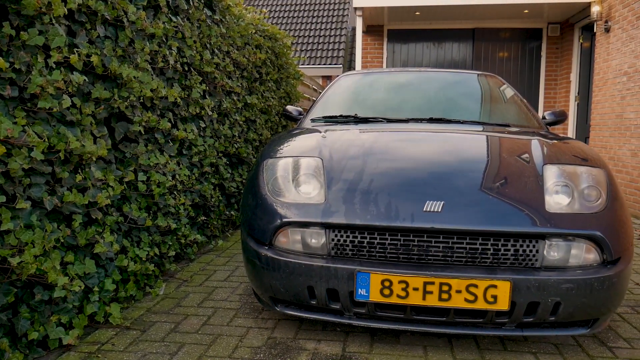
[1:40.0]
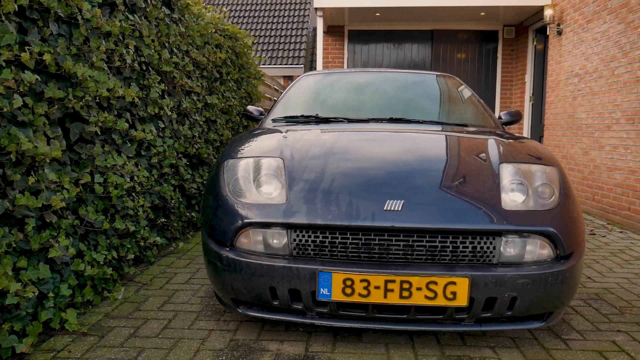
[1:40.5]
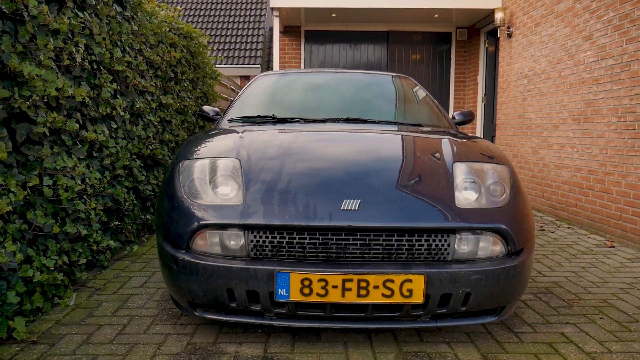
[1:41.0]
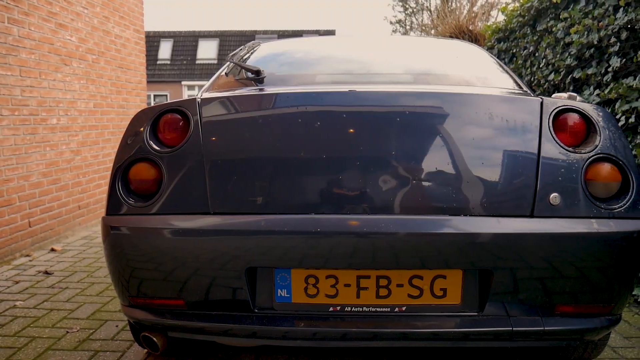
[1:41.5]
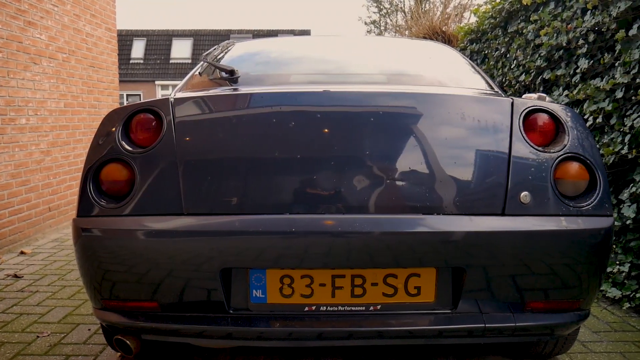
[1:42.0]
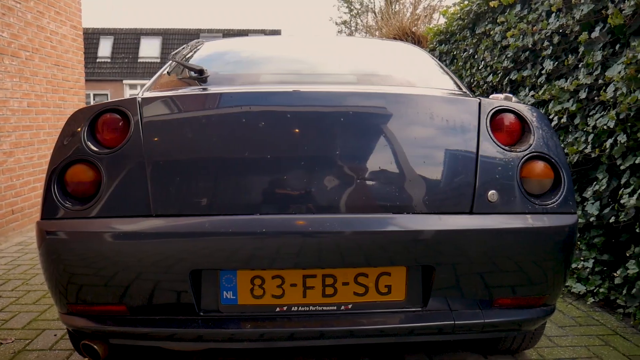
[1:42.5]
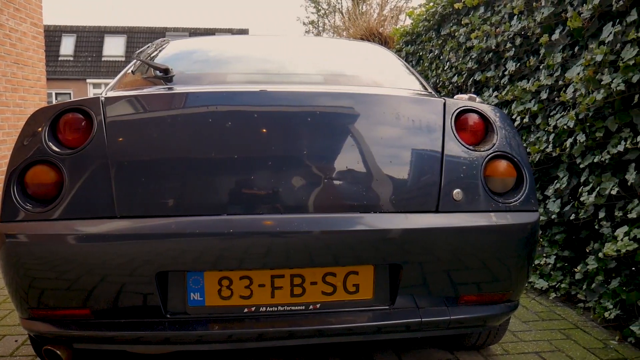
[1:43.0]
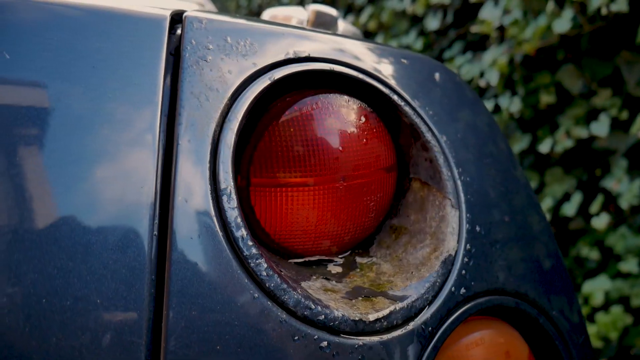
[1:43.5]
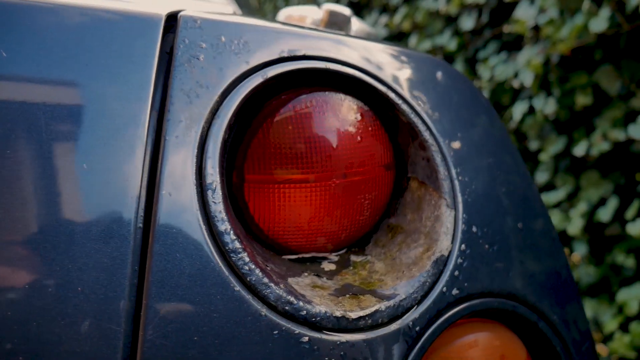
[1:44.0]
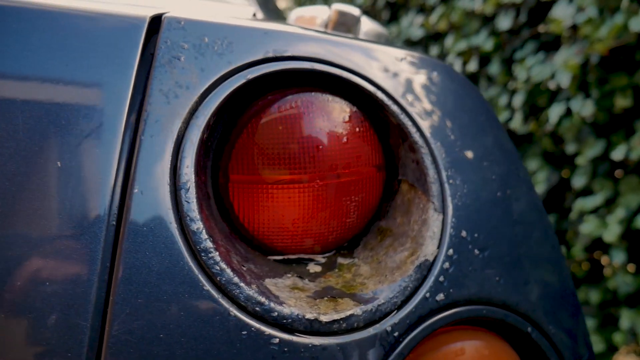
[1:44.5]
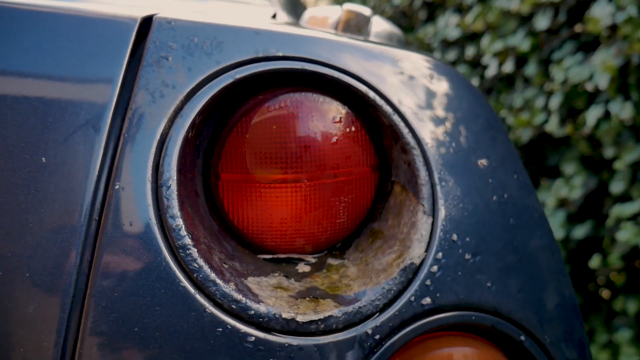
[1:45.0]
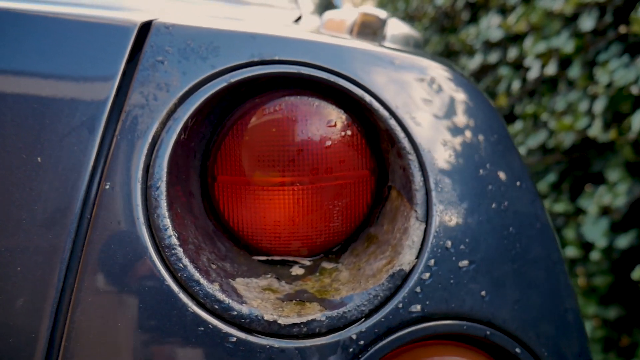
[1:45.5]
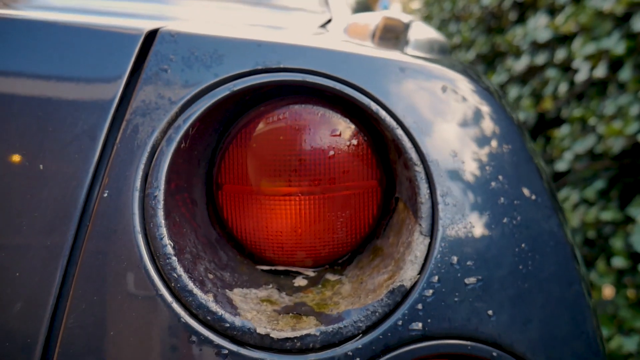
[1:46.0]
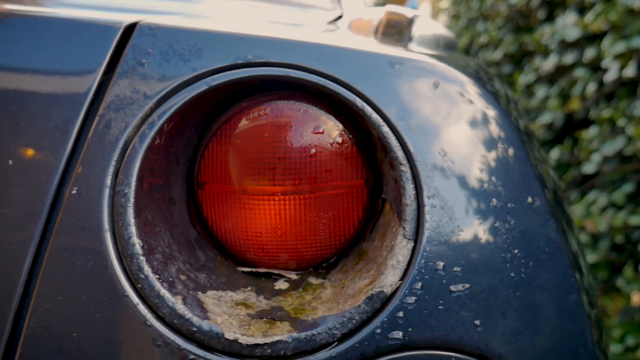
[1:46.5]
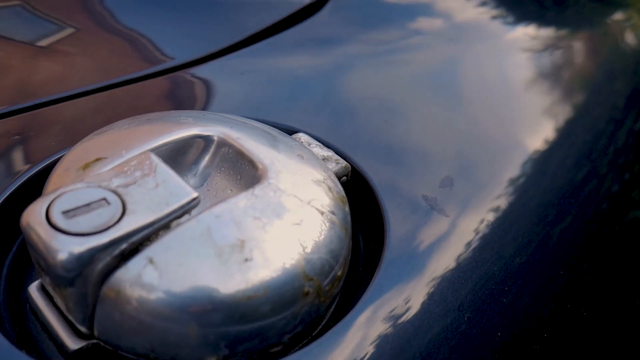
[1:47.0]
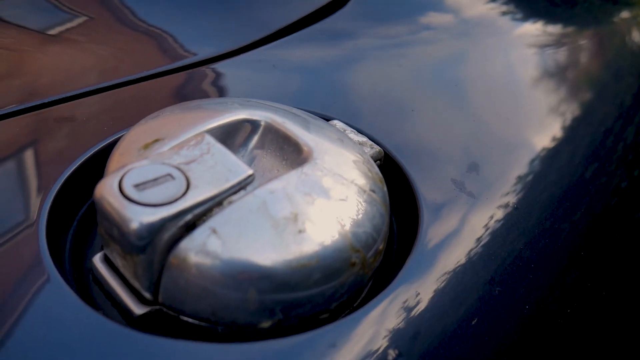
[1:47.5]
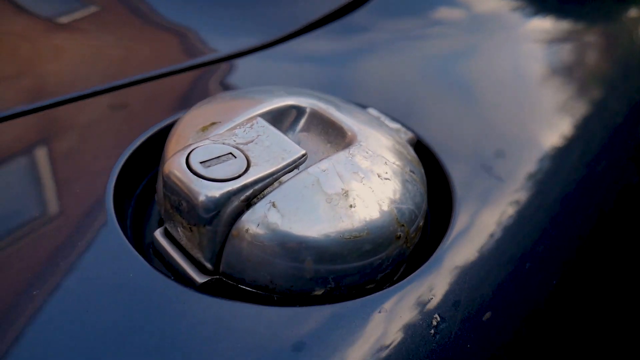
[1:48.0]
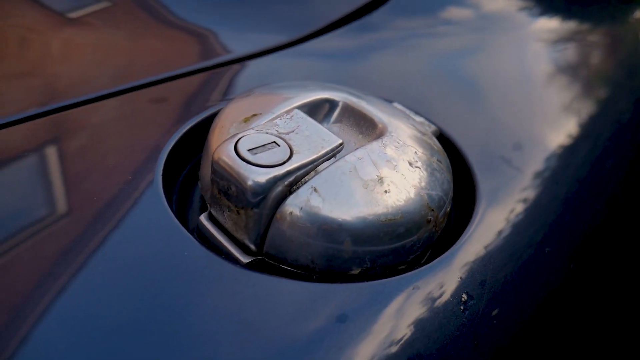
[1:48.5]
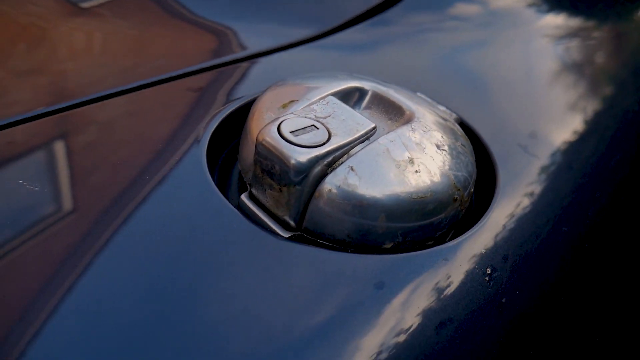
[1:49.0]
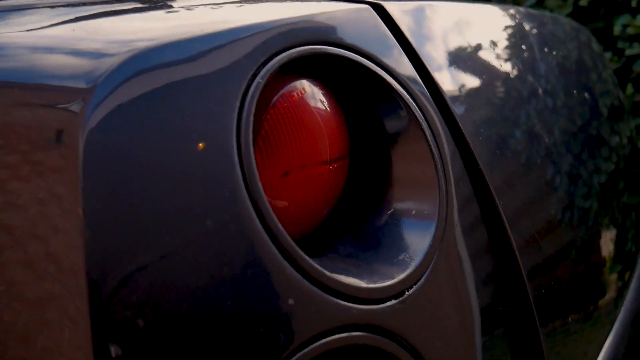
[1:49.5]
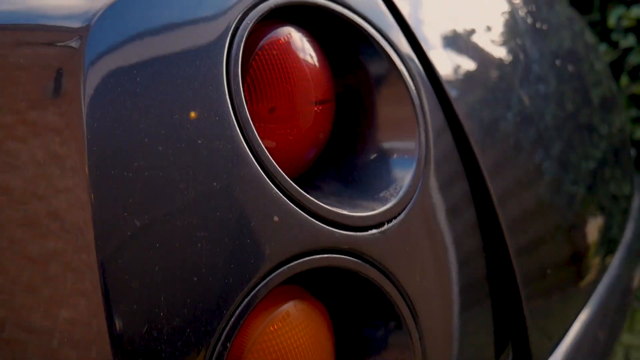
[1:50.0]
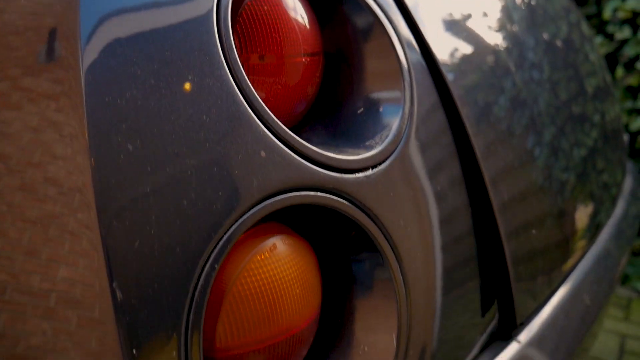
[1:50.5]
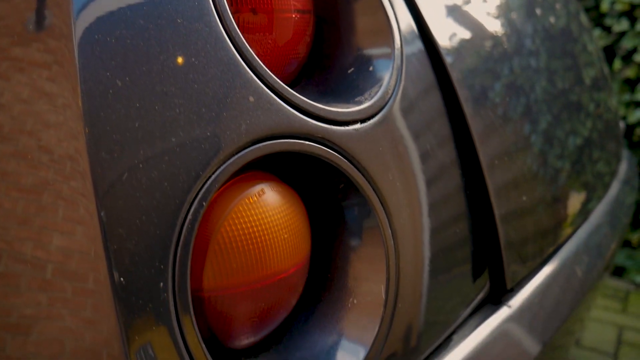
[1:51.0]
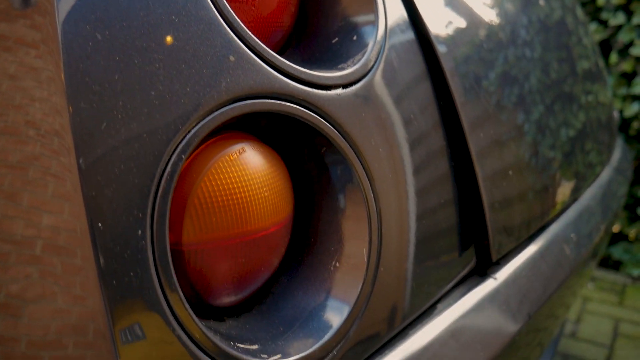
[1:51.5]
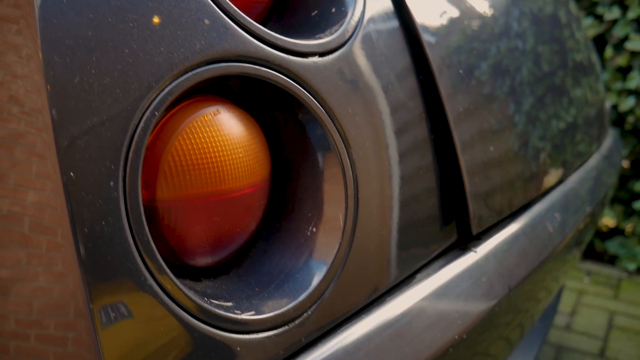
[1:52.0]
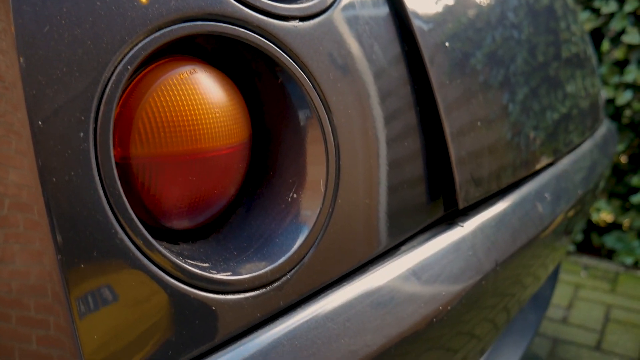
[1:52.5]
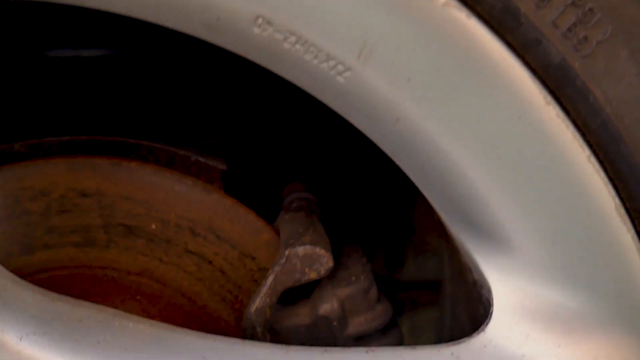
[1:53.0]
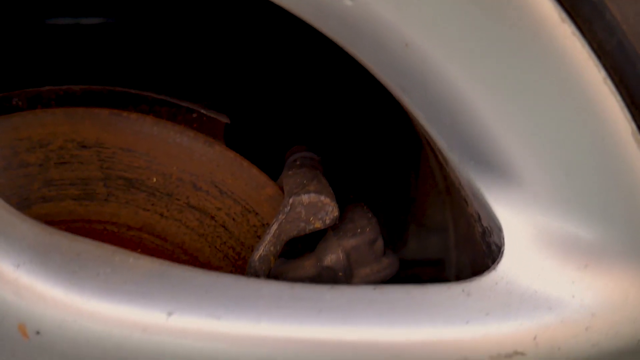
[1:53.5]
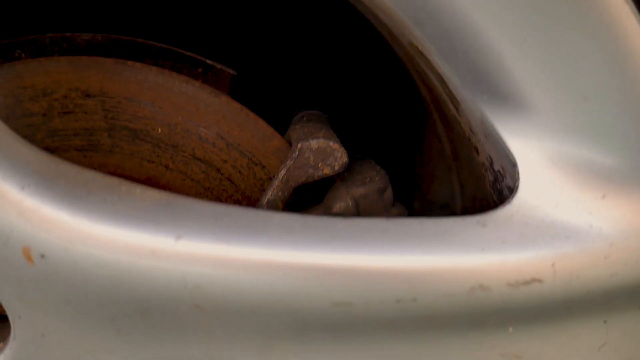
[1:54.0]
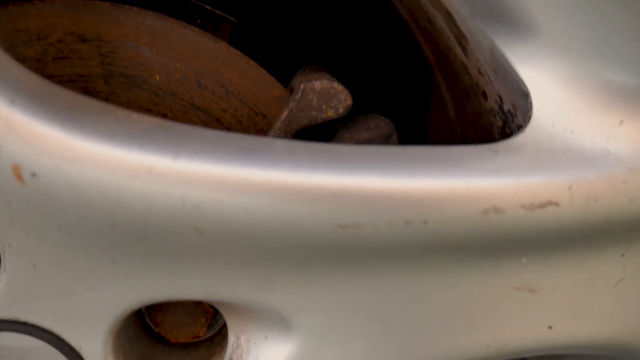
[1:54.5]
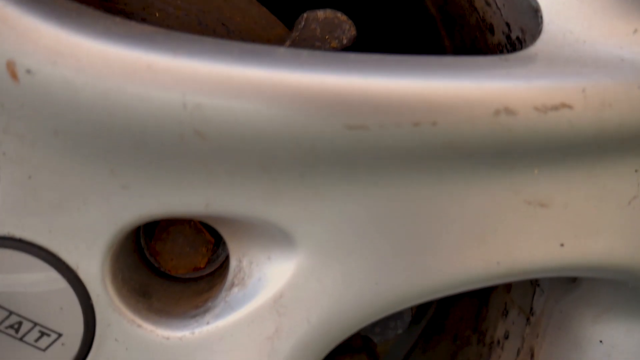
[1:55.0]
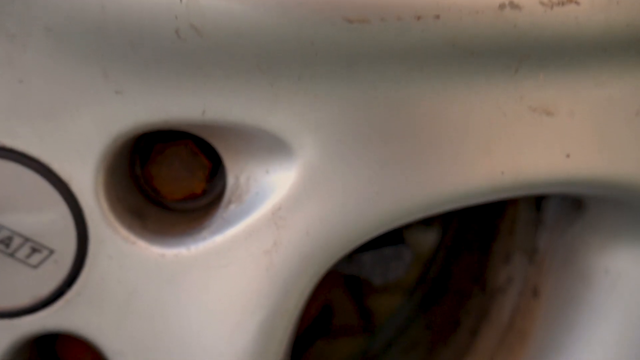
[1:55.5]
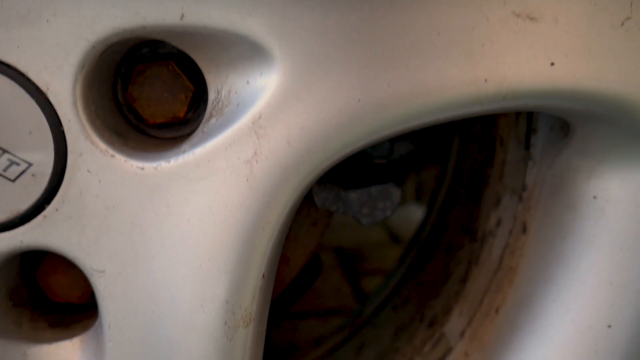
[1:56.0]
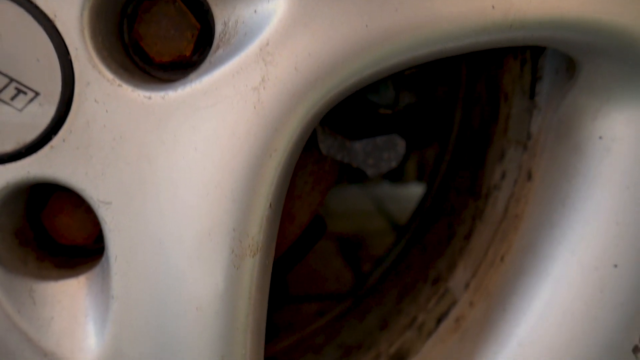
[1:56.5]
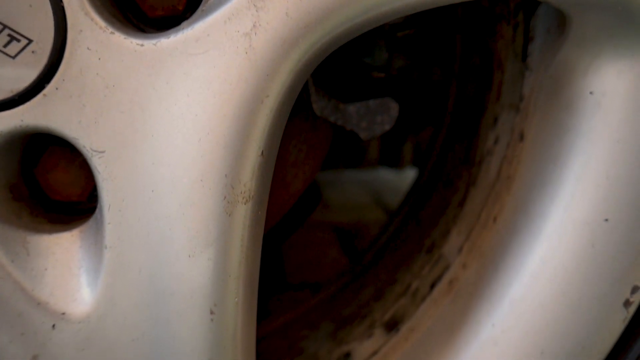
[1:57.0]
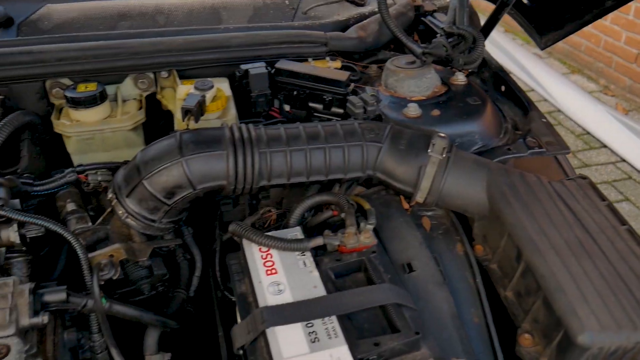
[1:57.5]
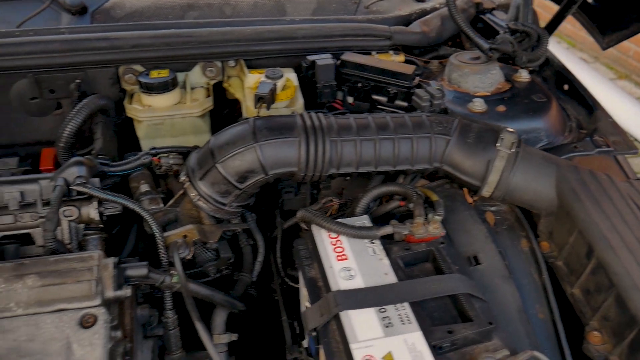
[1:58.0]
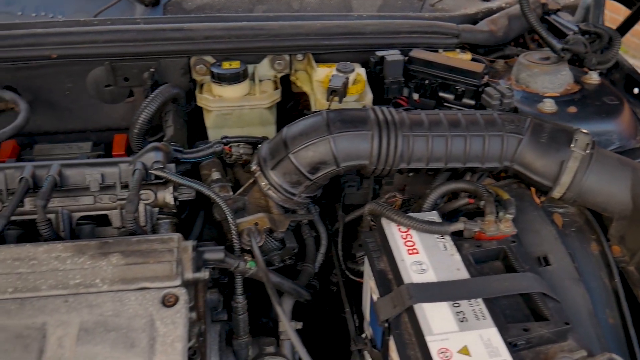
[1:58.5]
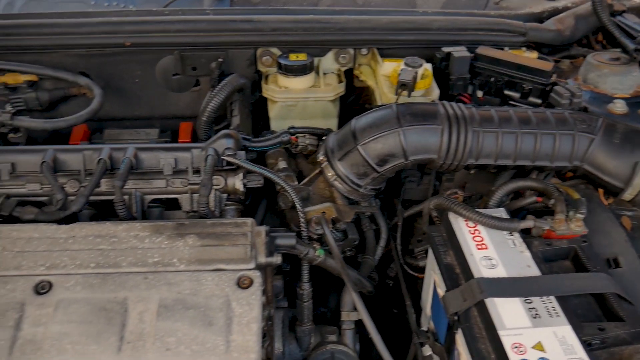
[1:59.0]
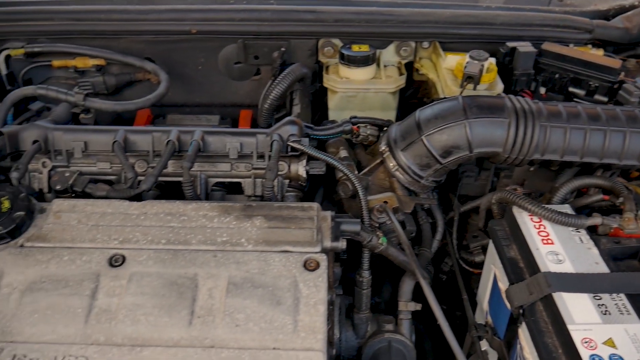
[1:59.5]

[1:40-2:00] The car is parked in the paved driveway by the ivory wall, right on the side of the house; it looks to be a blue sports car, a Fiat. At the top are two headlights, each with two different bulbs, and at the bottom where the grill is there appear to be two more lights. The license plate looks like maybe a European plate, showing "83.FB.SG", with a little blue square with "ML" in it on the left side. The back of the car has the same "83.FB.SG" plate with the blue triangle. On each side of the trunk, the rear lights are two different circles with red glass. A close-up shows the paint very chipped and rusted. Then there is what looks like maybe the gas cap, metal and silver.